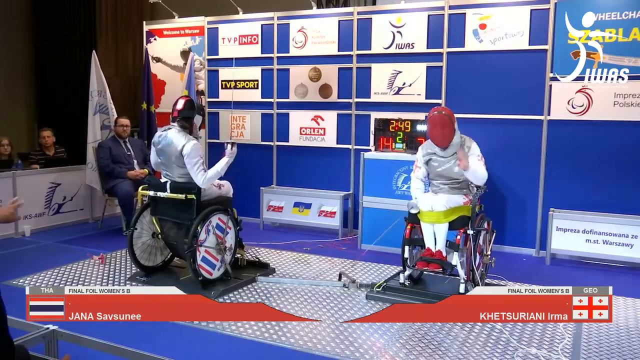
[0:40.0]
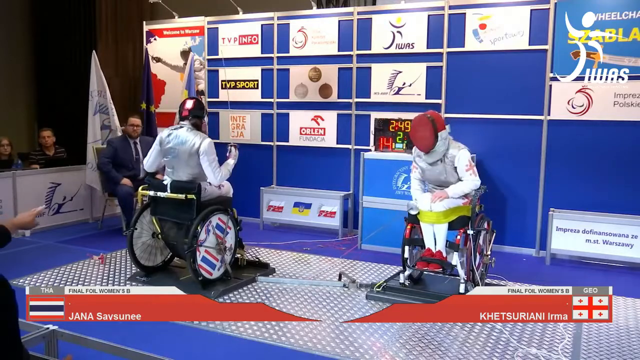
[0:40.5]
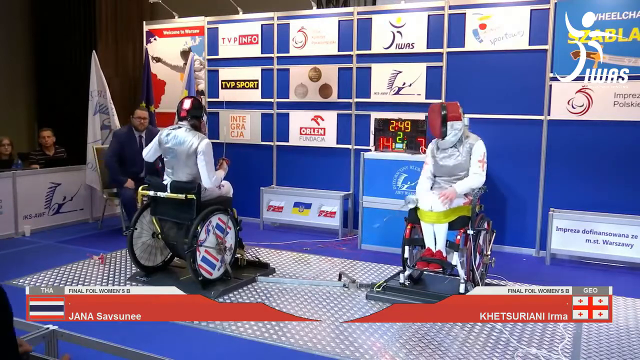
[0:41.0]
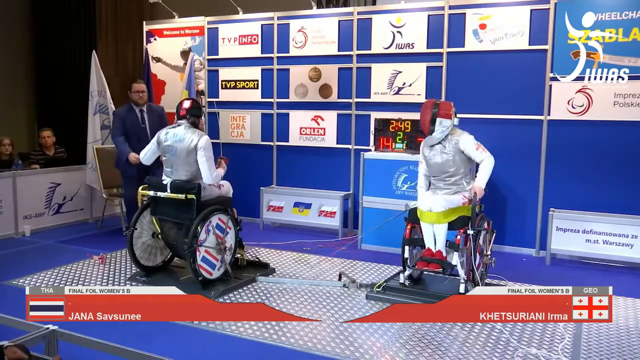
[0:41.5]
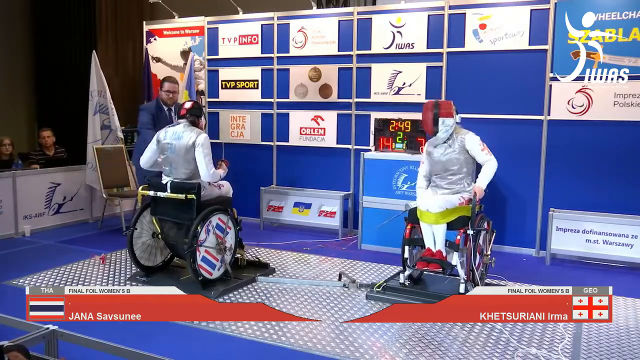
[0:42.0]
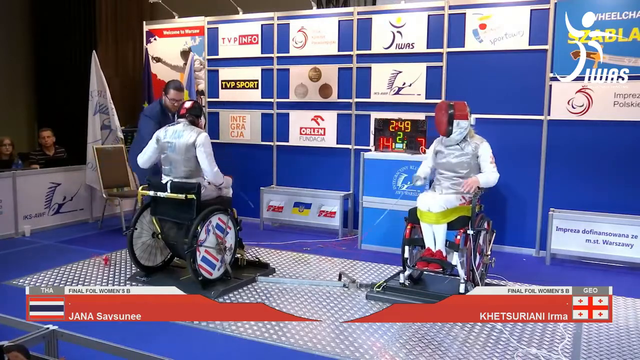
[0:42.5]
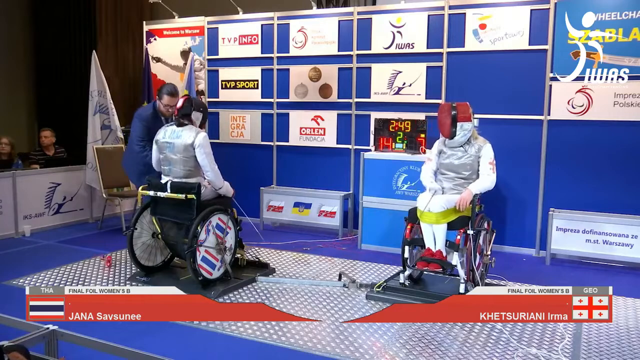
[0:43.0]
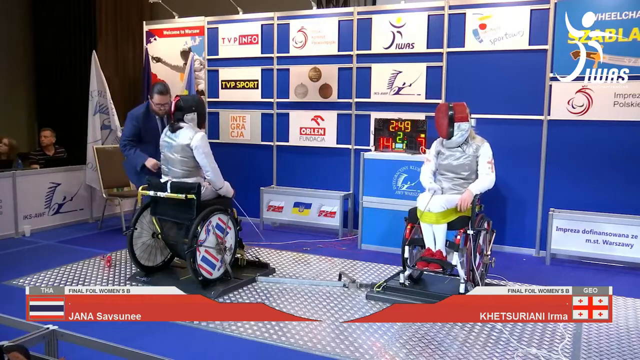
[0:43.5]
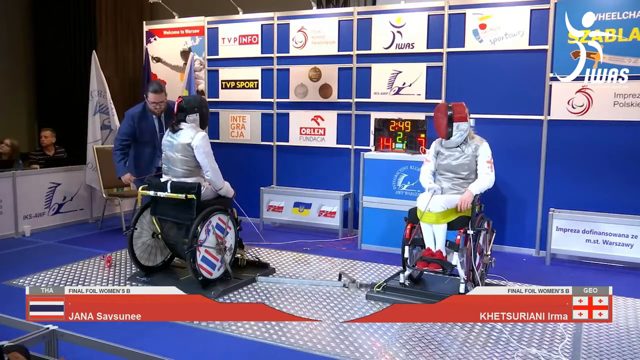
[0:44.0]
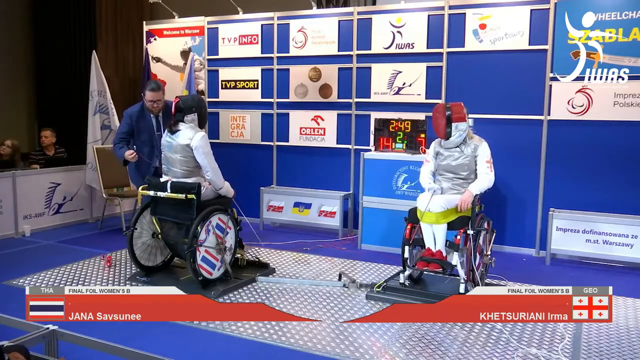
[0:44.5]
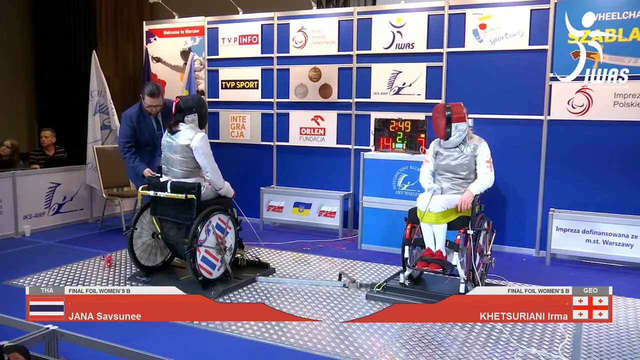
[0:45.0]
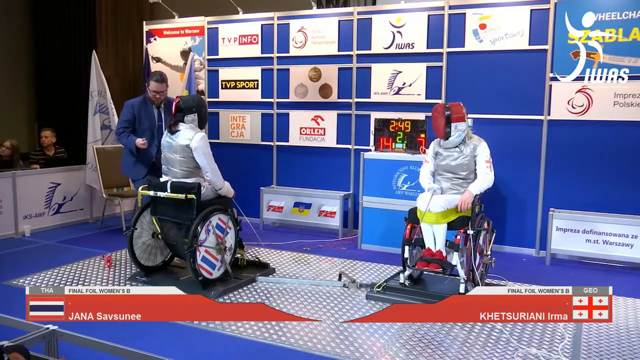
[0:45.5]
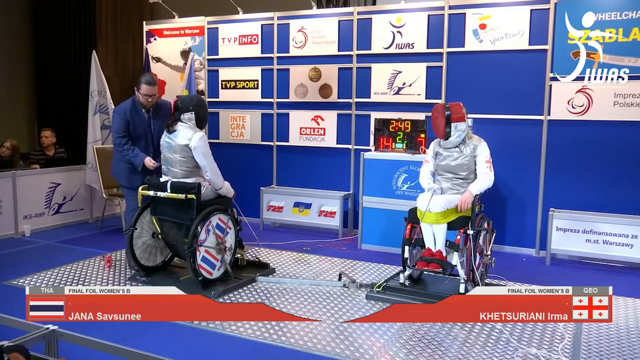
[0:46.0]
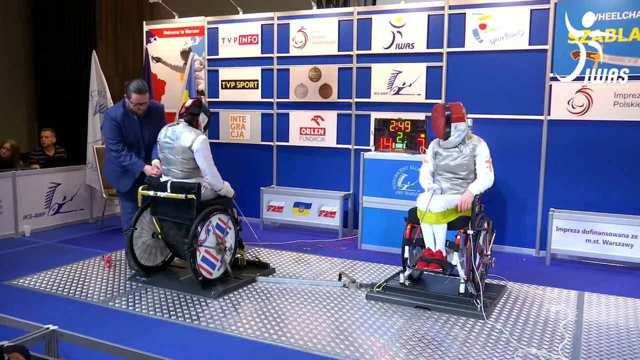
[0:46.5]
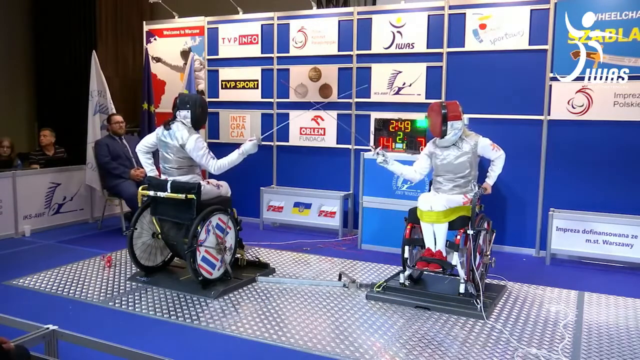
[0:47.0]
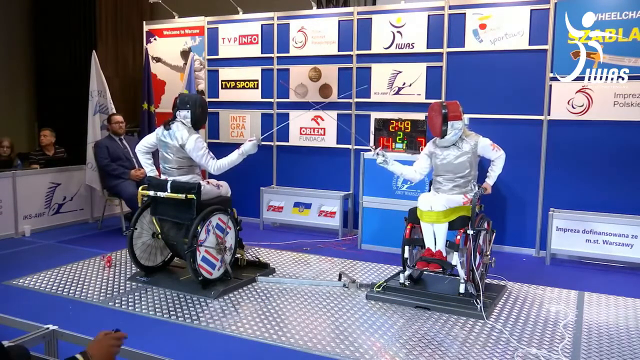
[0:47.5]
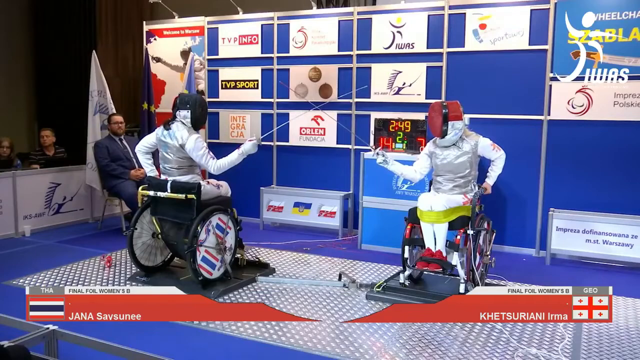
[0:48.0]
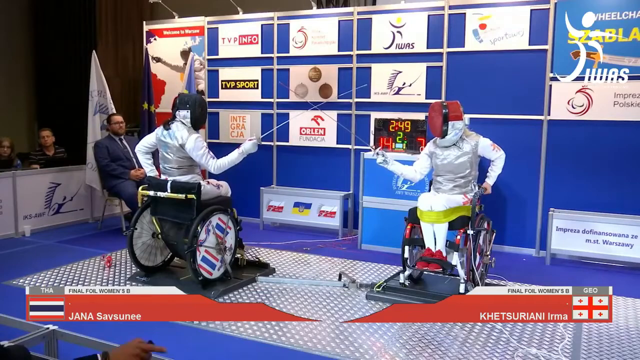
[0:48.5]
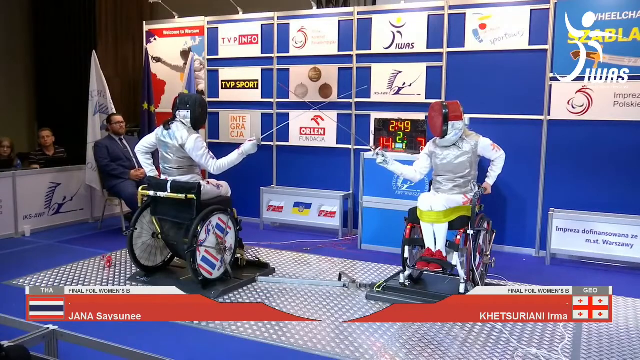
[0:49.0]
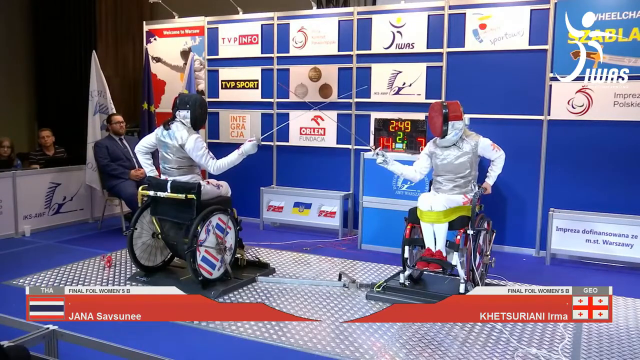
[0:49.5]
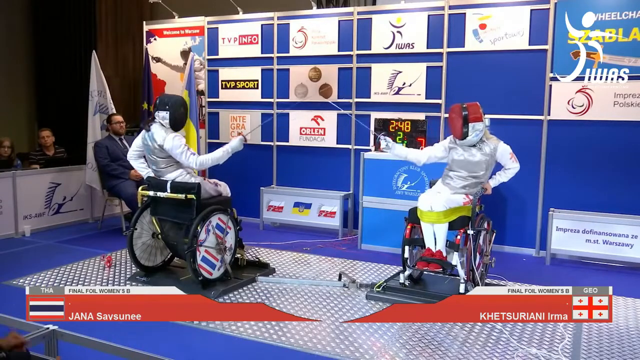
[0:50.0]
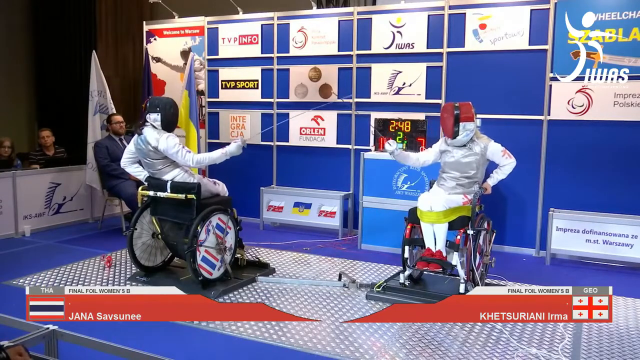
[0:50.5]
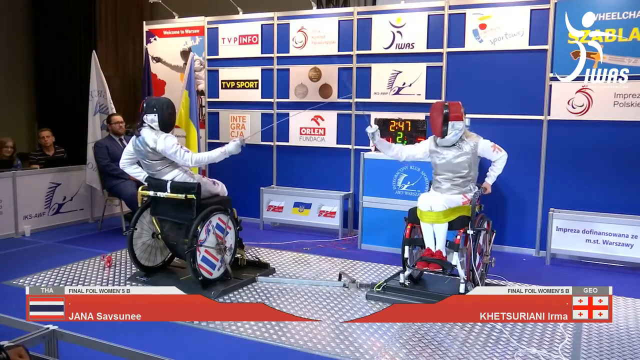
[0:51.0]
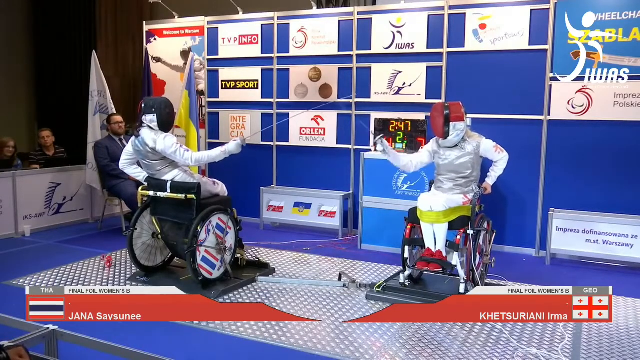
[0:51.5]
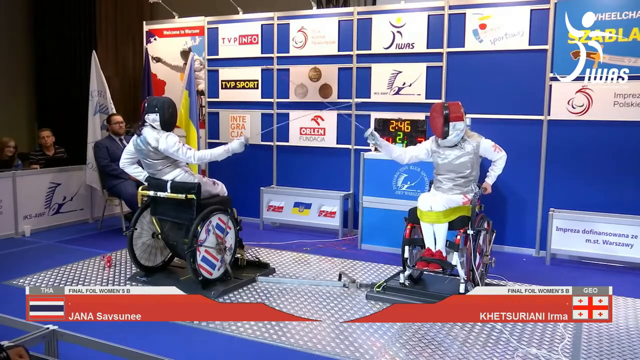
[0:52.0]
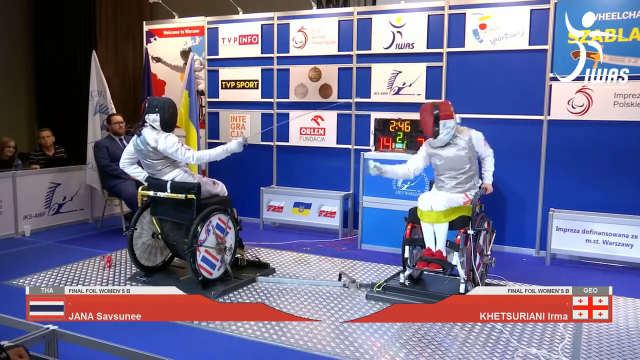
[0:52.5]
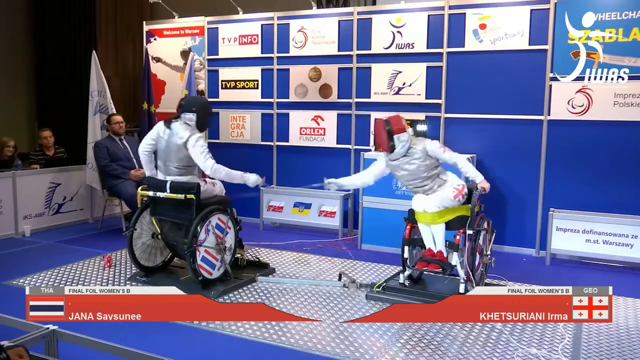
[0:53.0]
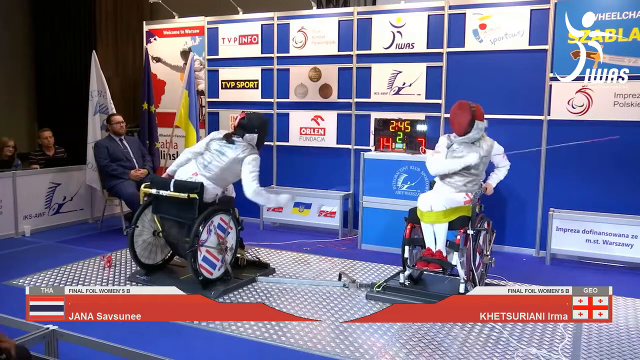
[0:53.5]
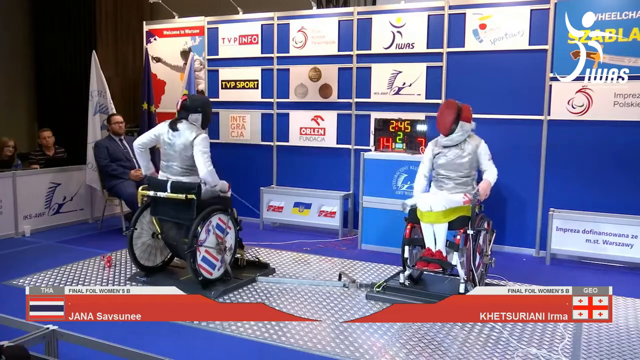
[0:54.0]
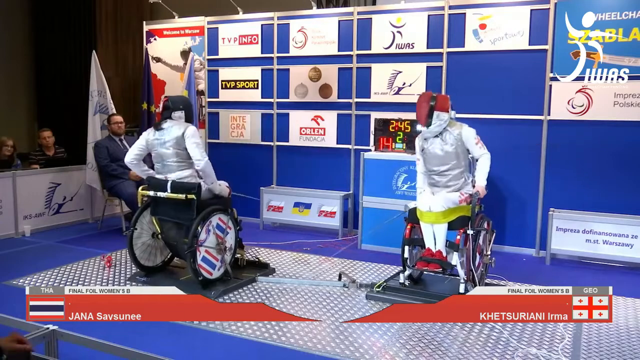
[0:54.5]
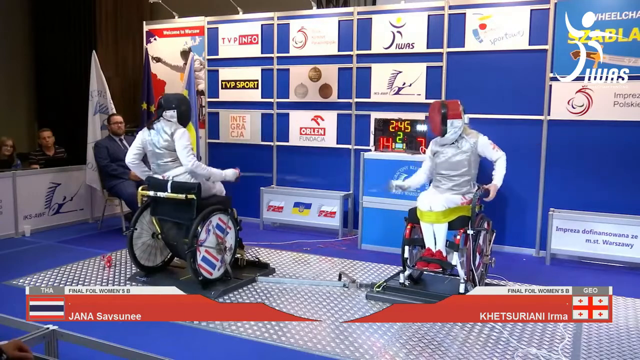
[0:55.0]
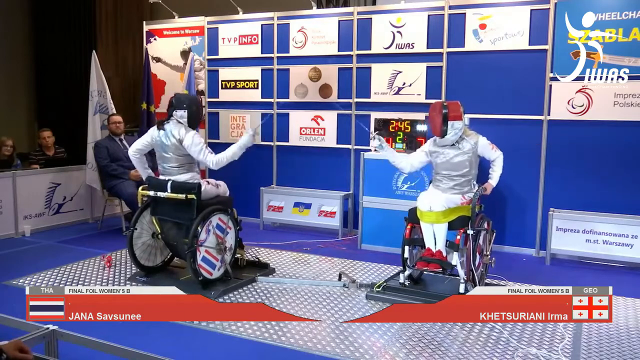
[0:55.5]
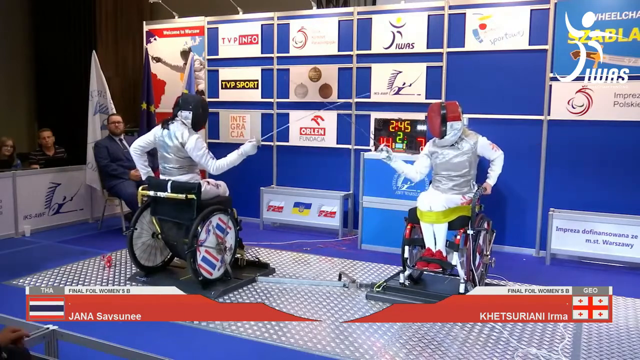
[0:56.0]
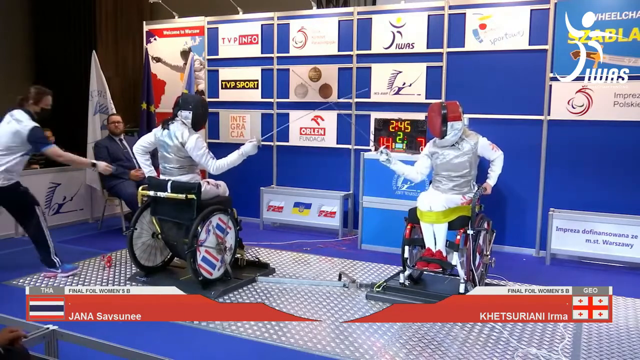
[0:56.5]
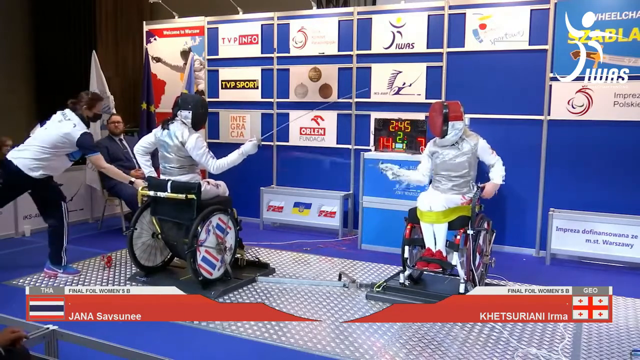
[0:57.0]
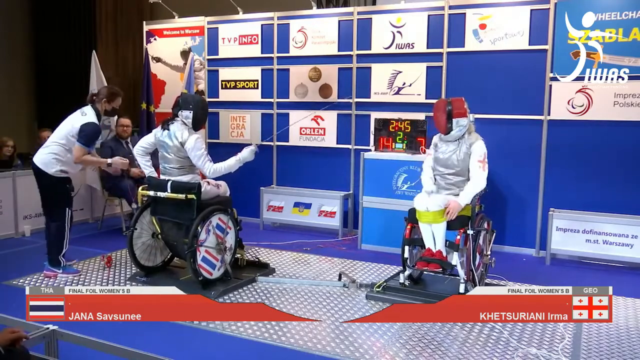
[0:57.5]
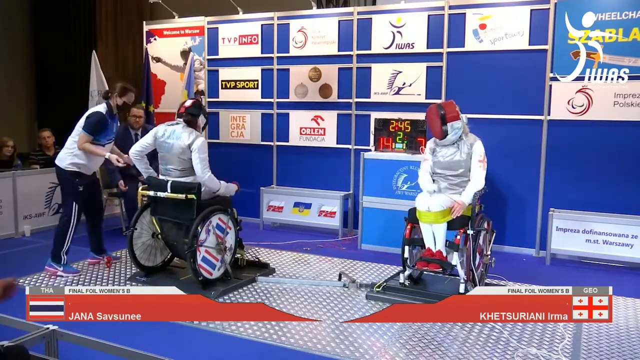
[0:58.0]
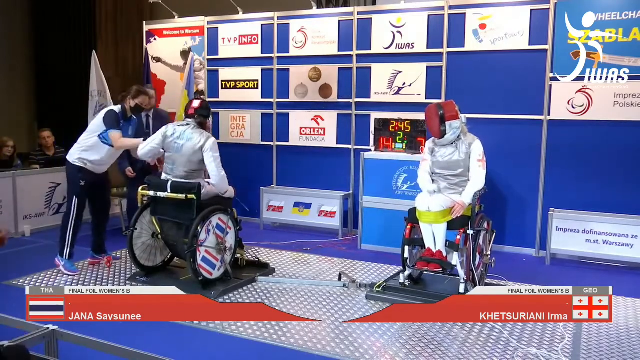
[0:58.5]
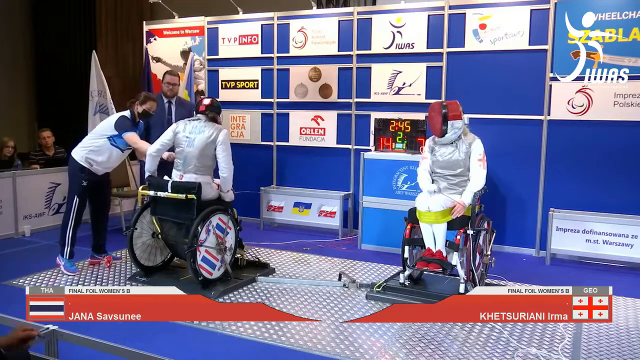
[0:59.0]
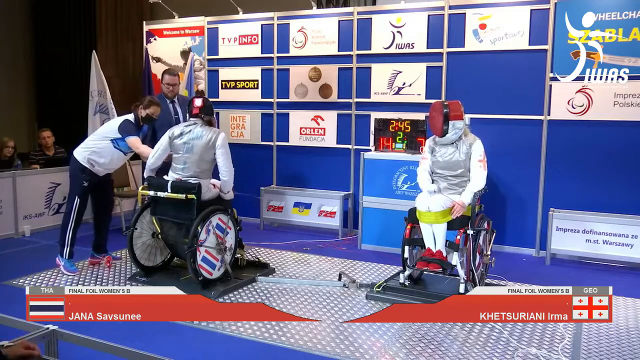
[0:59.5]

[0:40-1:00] The judge in the top-left corner stands up. The fencers battle back and forth. A female comes from the left side and walks over to the person on the left; she wears a black mask, dark blue pants and light blue shoes. The buckle and strap that keeps the person on the left strapped into the wheelchair has come off. The judge, who is wearing a suit, gets up from his chair, walks over, and attaches the strap or belt securing the person on the left into the wheelchair.